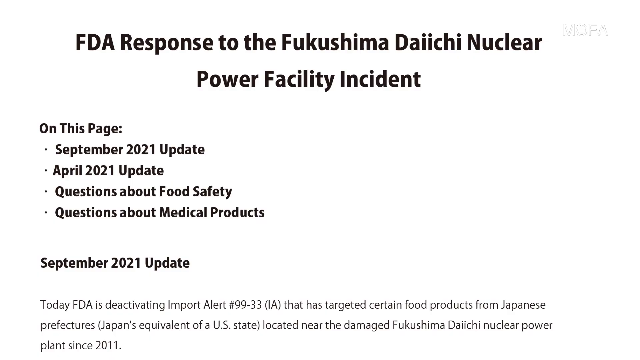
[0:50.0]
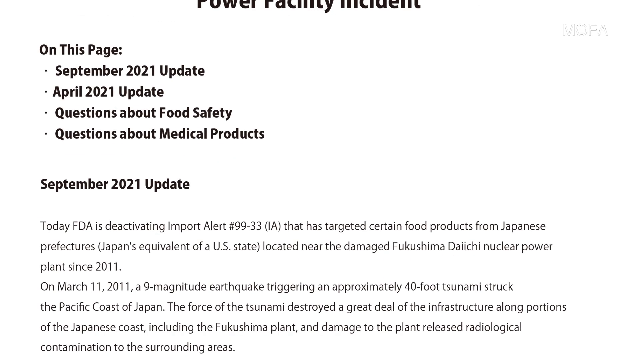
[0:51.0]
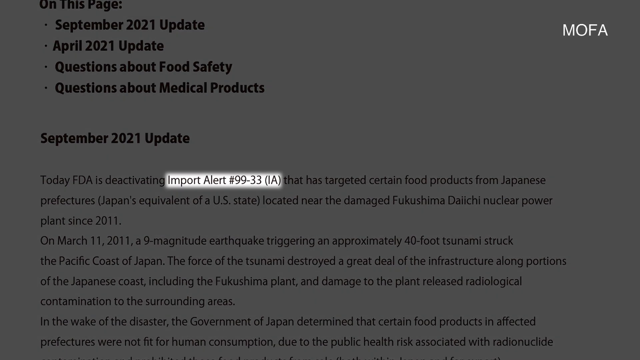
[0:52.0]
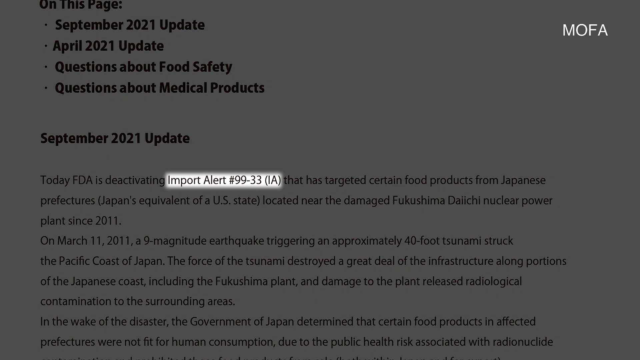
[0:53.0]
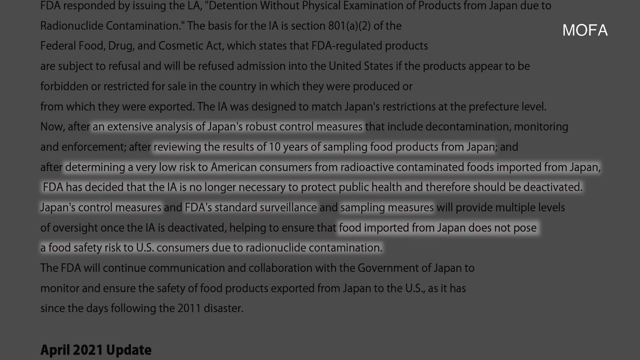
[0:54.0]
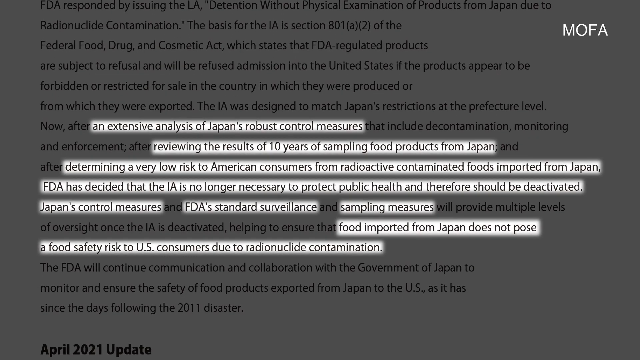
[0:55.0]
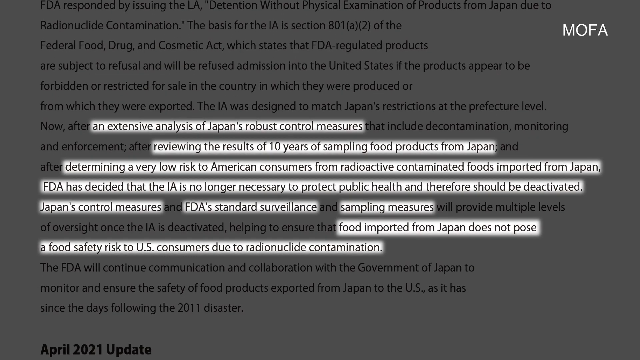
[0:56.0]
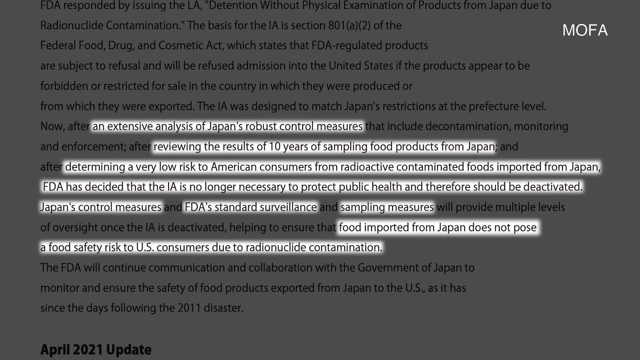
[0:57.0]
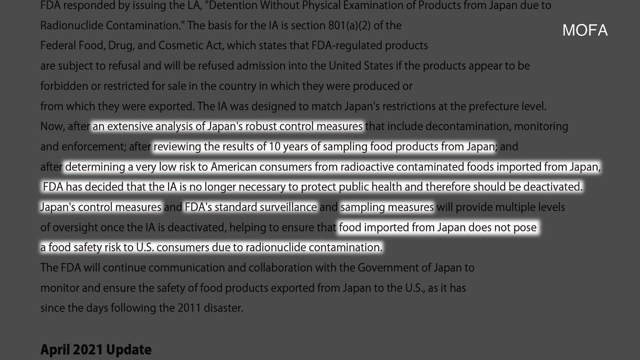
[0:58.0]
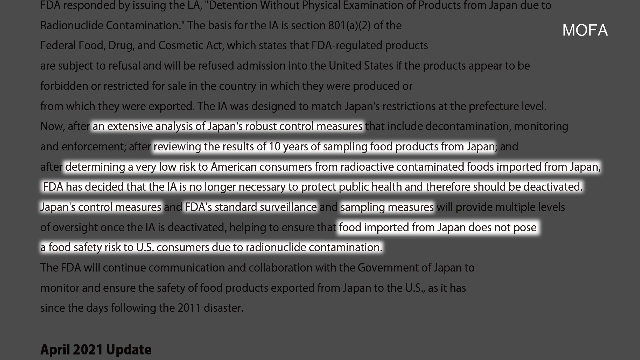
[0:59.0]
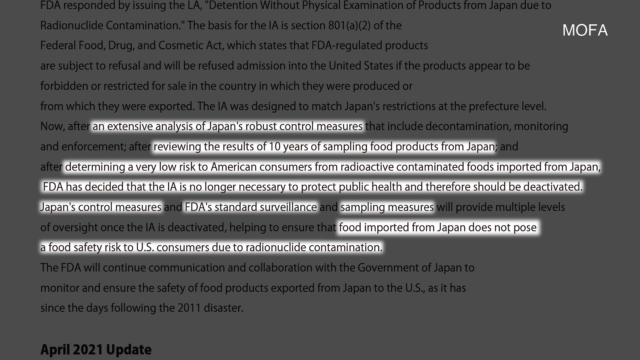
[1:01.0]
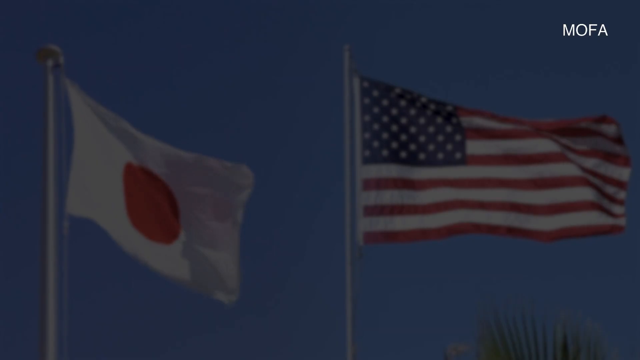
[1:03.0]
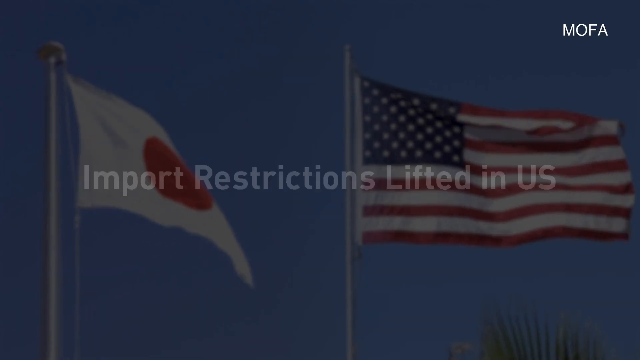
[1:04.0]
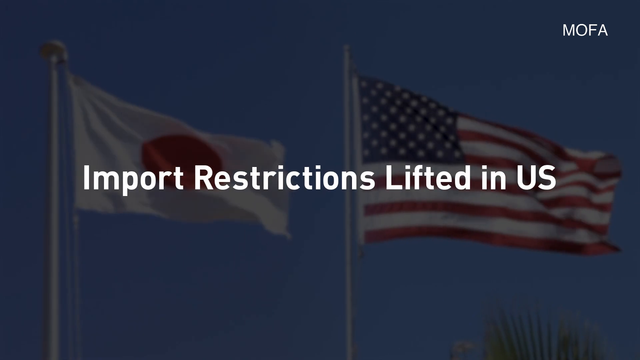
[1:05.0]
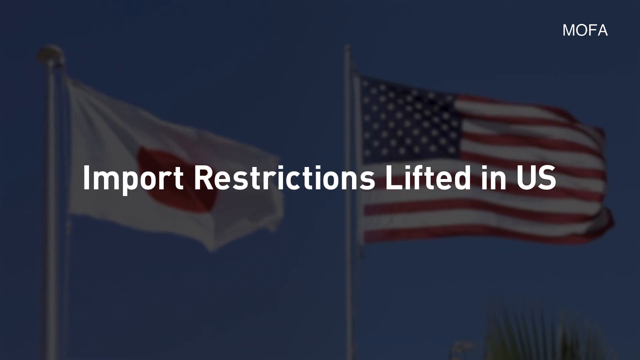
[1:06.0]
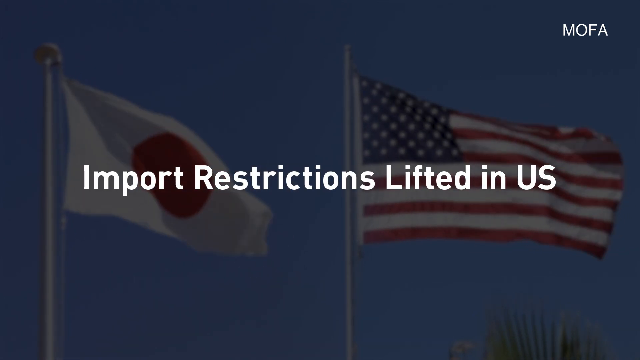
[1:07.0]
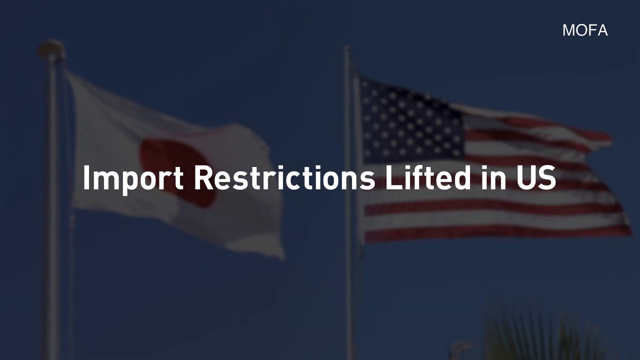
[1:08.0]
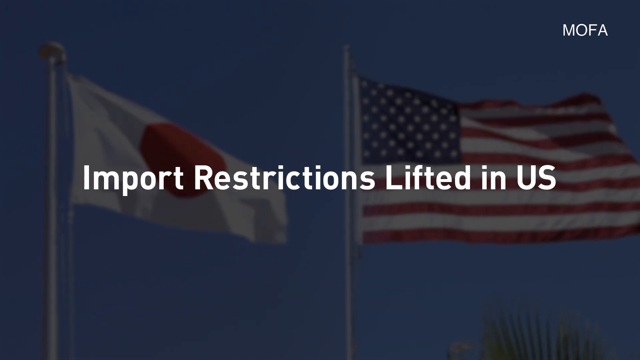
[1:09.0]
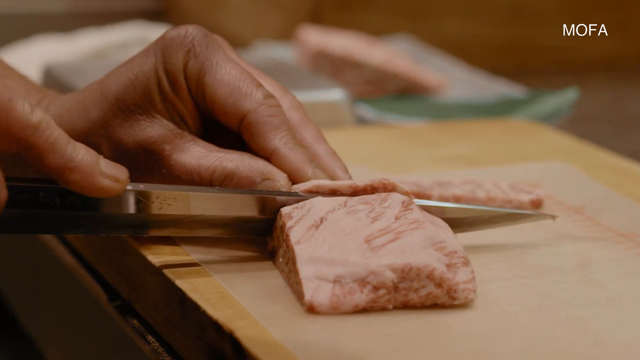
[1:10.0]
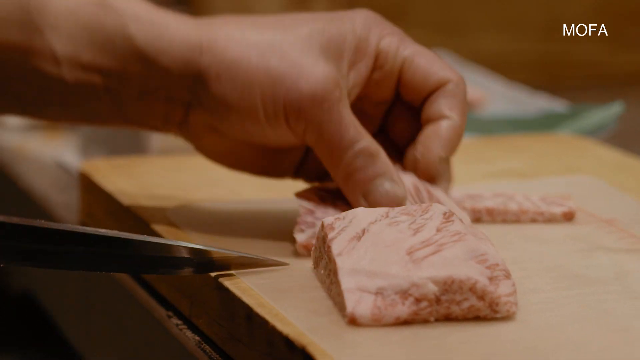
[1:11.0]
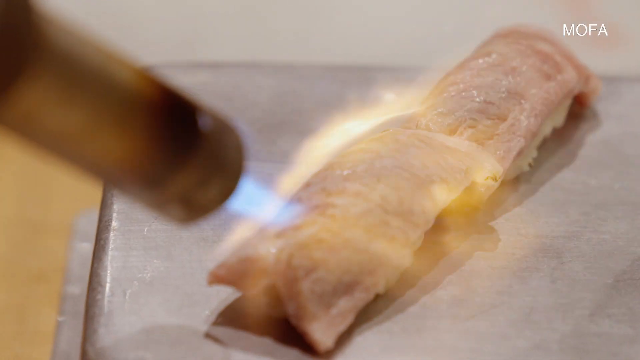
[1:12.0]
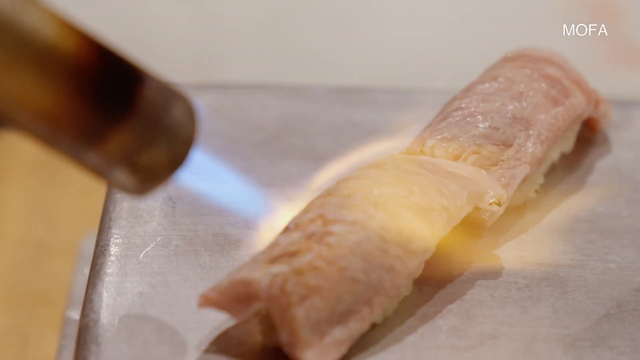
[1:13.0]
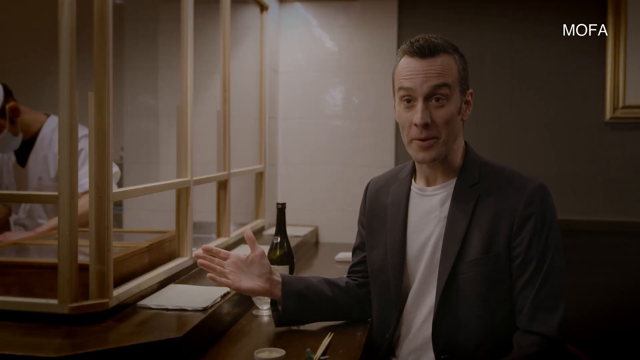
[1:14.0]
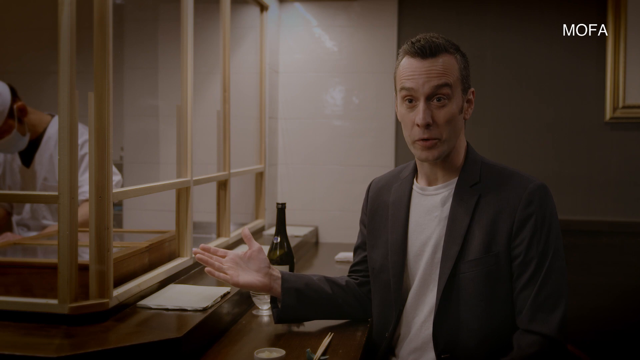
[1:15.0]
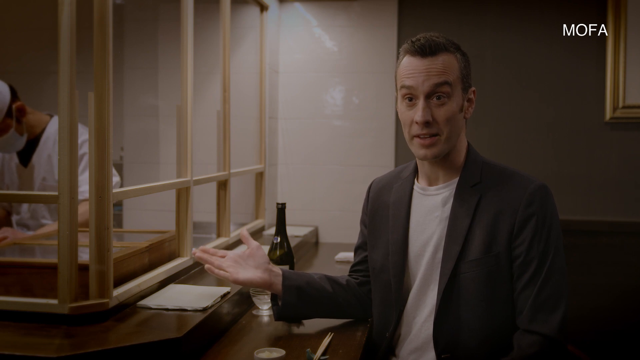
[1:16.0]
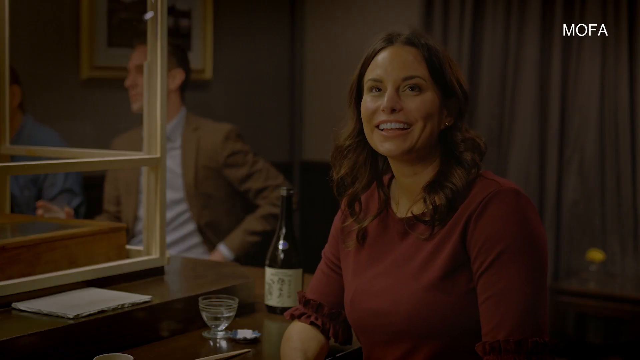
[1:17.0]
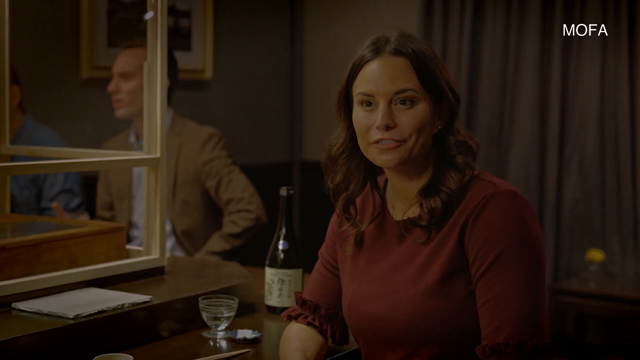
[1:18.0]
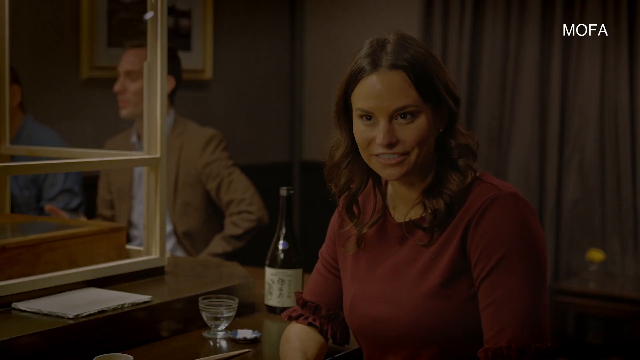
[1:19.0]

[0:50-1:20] A page shows import alert number 99-33IA. It scrolls down a little and highlights different passages, including "an extensive analysis of Japan's robust control measures, reviewing the results of 10 years of sampling food products from Japan, determining a very low risk to American consumers from radioactive contaminated foods imported from Japan", "FDA has decided that IA is no longer necessary to protect public health and therefore should be deactivated", "Japan's control measures", "FDA standard surveillance sampling measures" and "food imported from Japan does not impose a safety food risk to US consumers due to radionuclide contamination". Next, a Japanese flag and a US flag wave side by side, with "import restrictions lifted in US" across the screen. Someone cuts meat that looks like tender beef, and it is then broiled. A person looks at the camera and talks, followed by another person who talks and looks very happy.